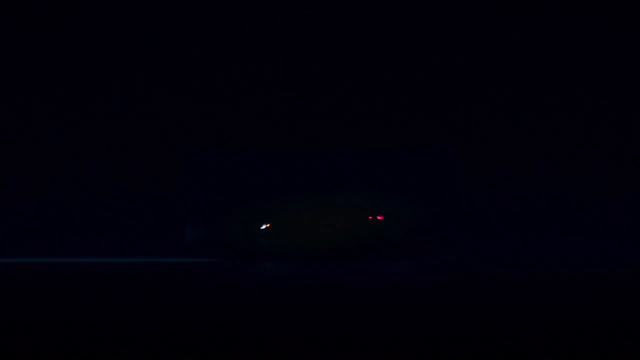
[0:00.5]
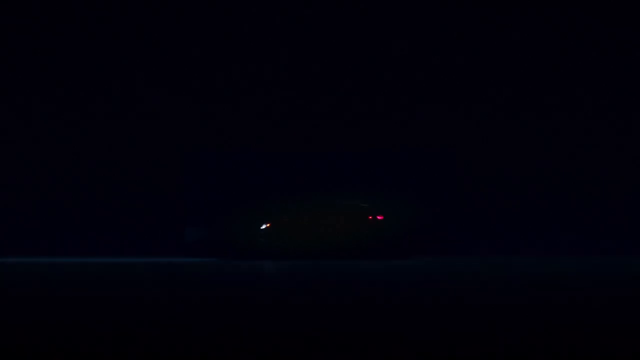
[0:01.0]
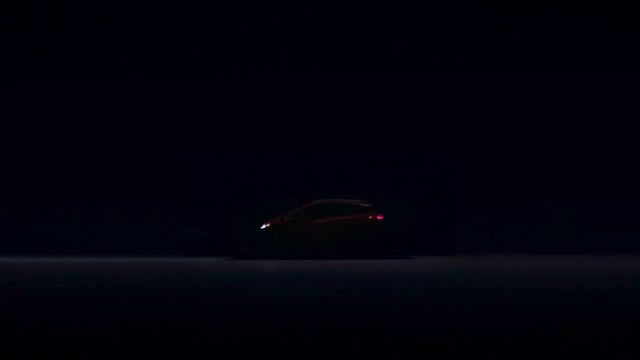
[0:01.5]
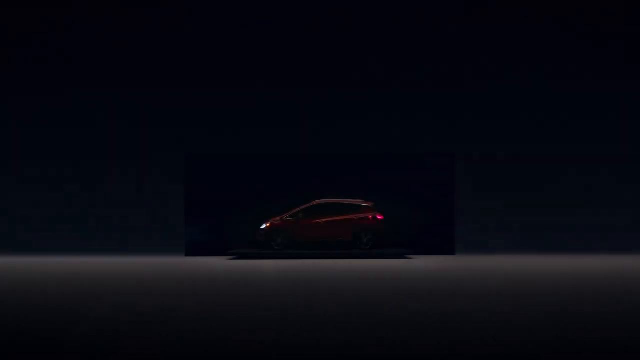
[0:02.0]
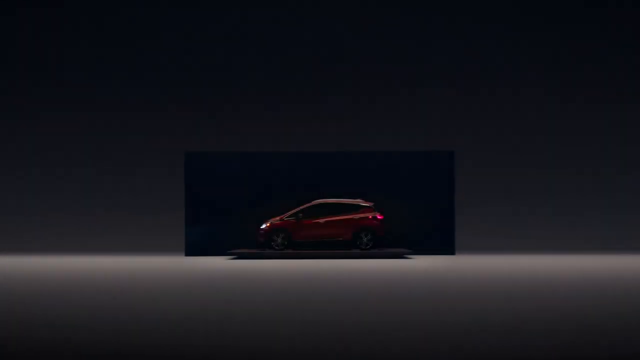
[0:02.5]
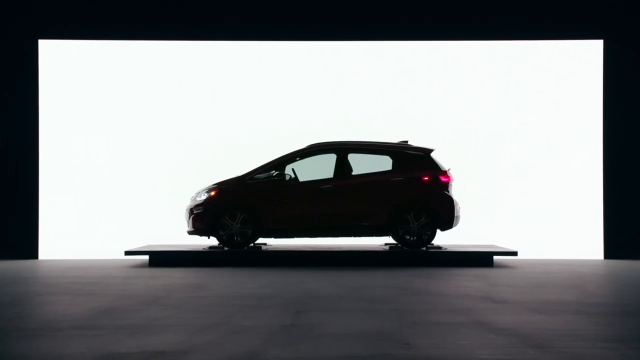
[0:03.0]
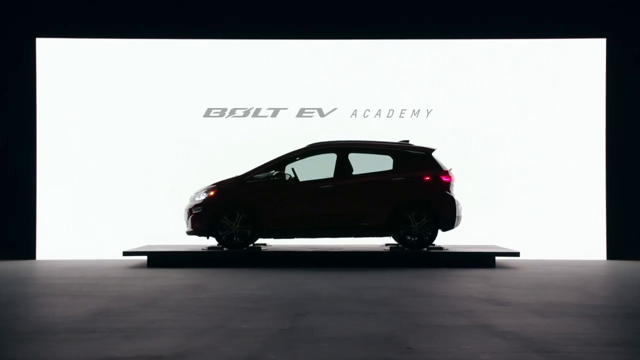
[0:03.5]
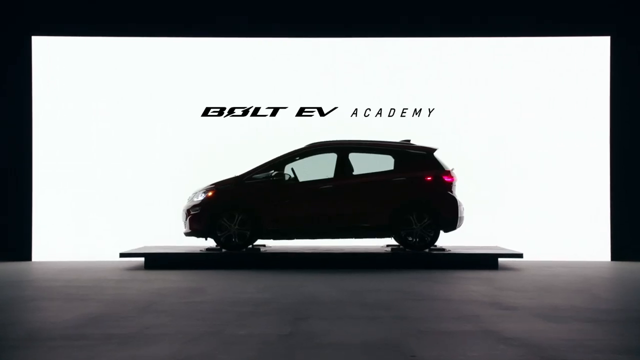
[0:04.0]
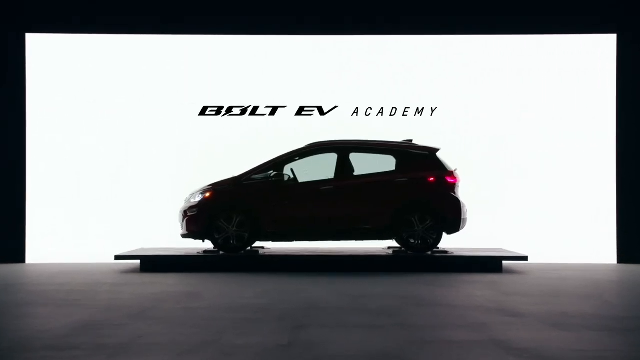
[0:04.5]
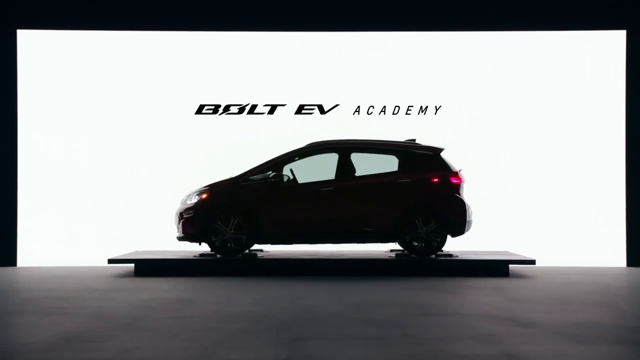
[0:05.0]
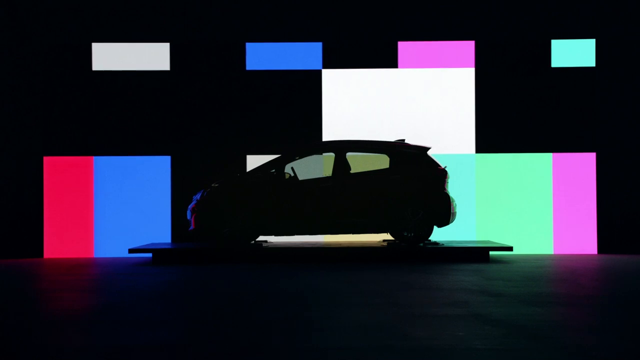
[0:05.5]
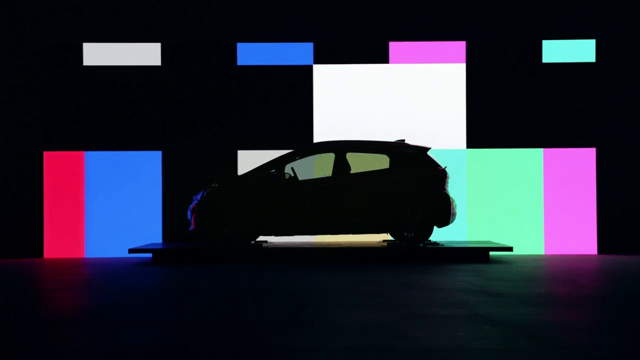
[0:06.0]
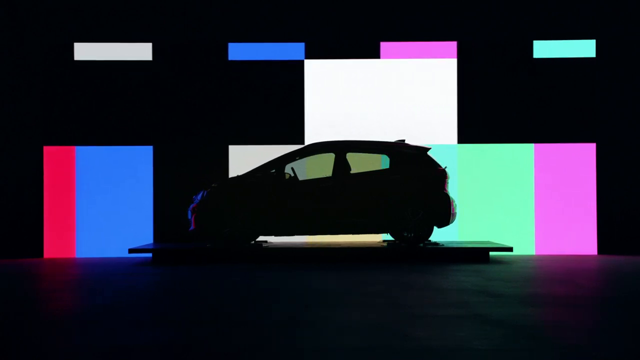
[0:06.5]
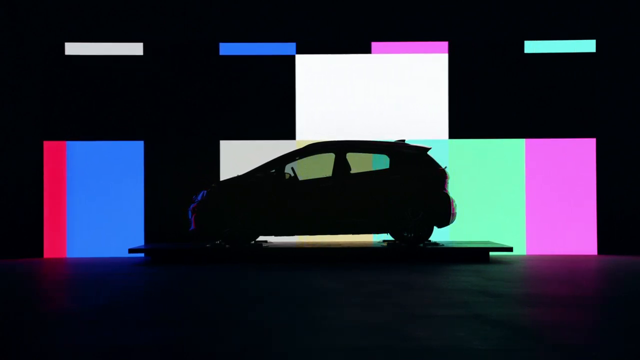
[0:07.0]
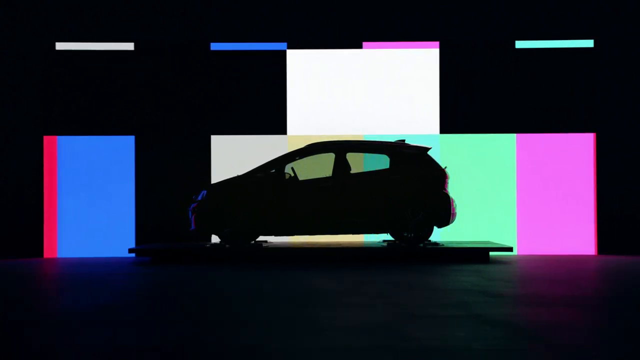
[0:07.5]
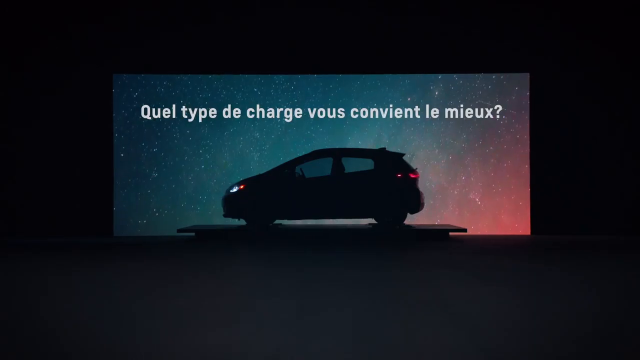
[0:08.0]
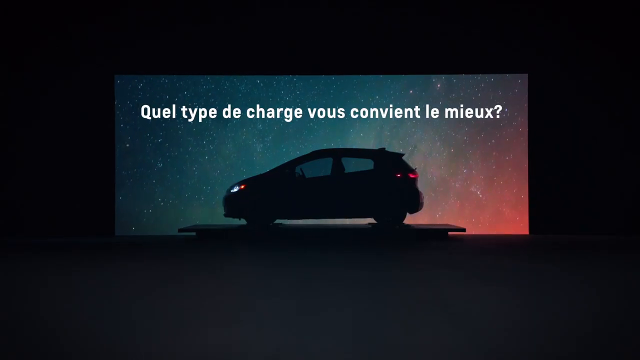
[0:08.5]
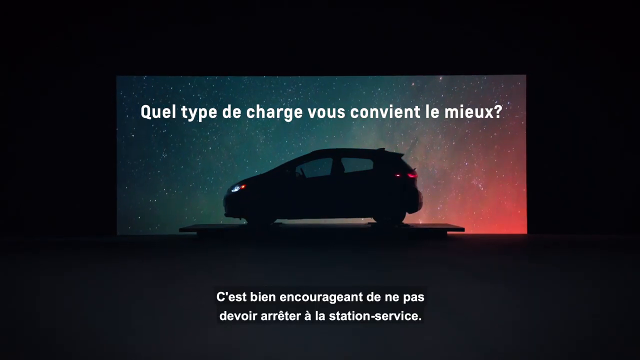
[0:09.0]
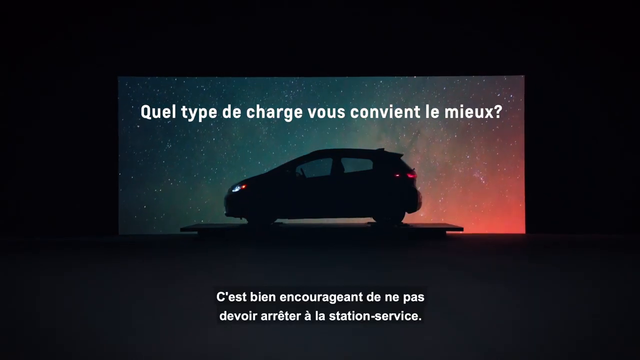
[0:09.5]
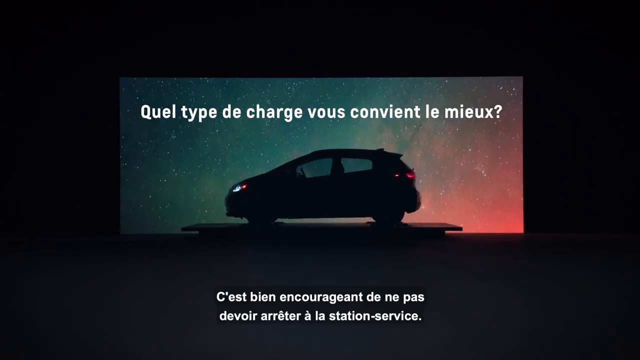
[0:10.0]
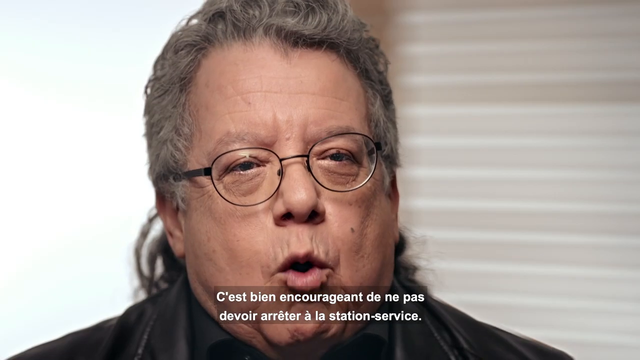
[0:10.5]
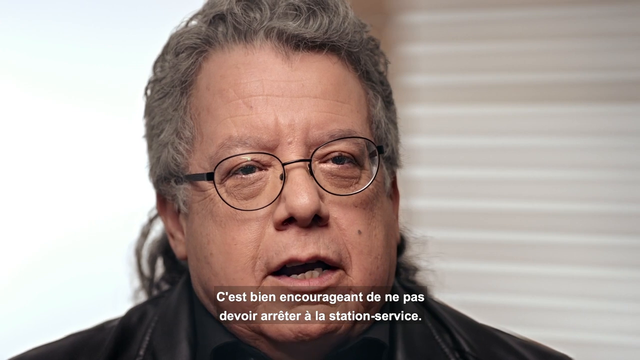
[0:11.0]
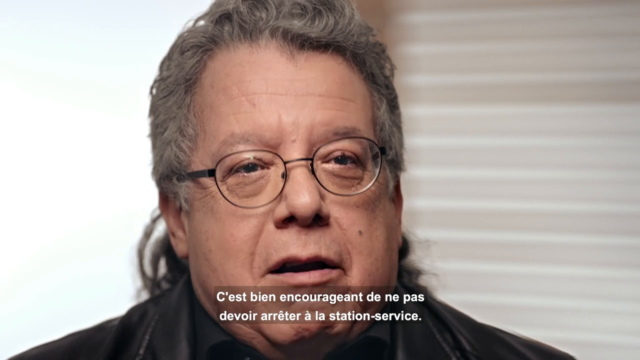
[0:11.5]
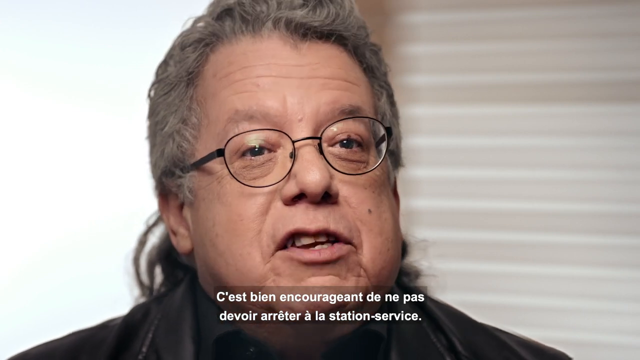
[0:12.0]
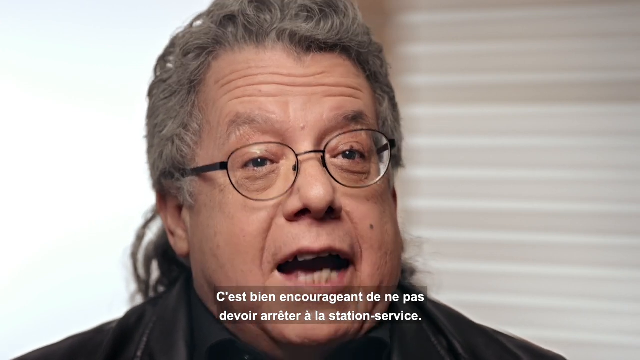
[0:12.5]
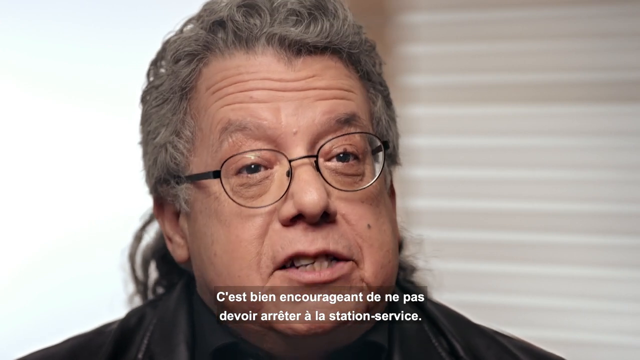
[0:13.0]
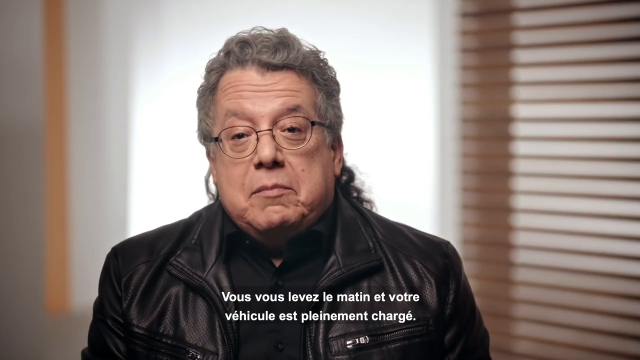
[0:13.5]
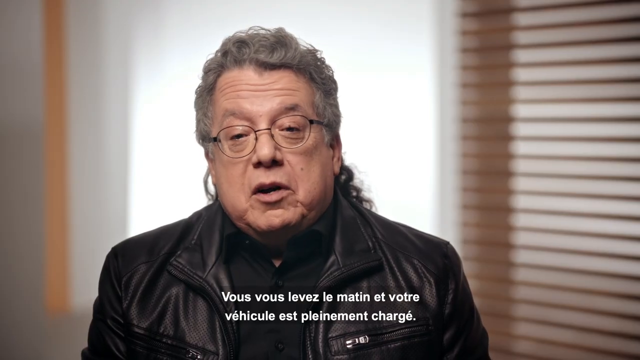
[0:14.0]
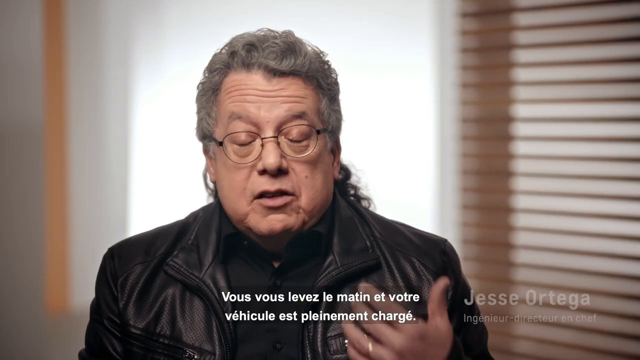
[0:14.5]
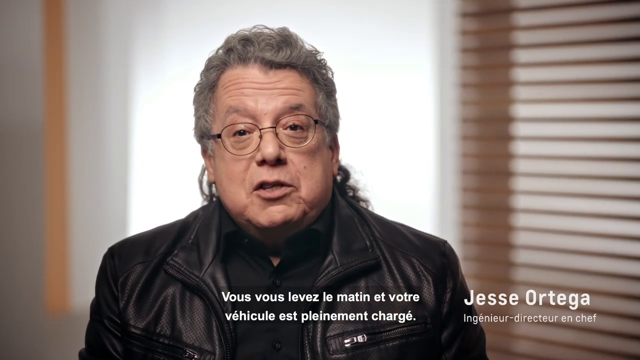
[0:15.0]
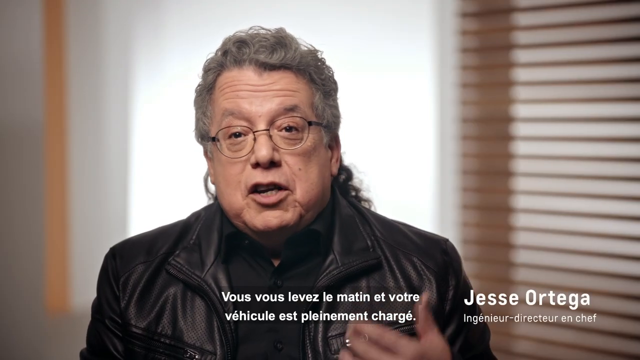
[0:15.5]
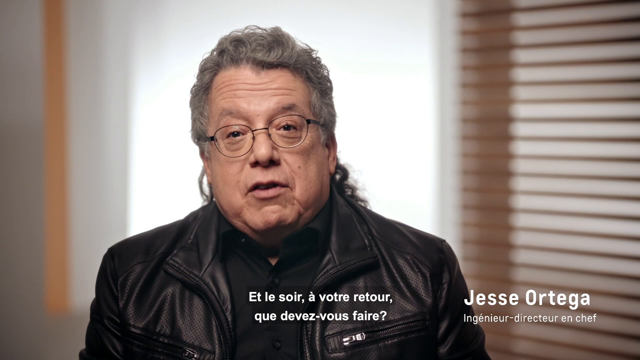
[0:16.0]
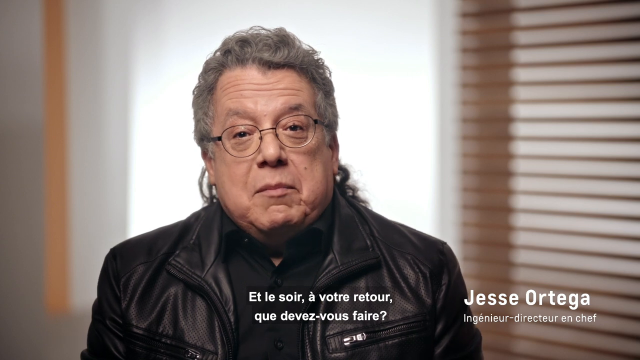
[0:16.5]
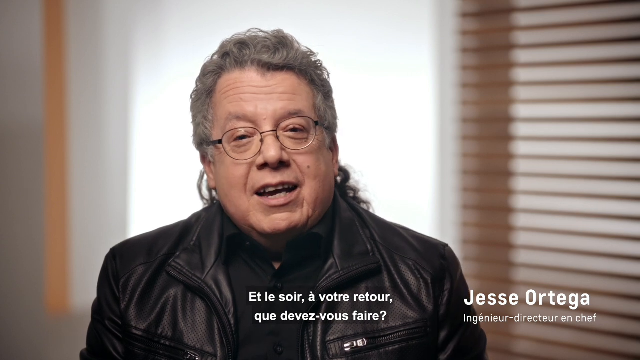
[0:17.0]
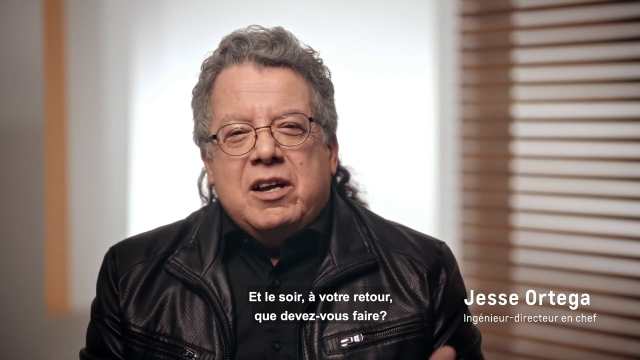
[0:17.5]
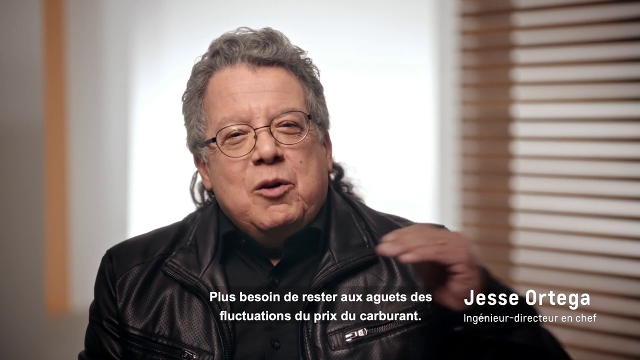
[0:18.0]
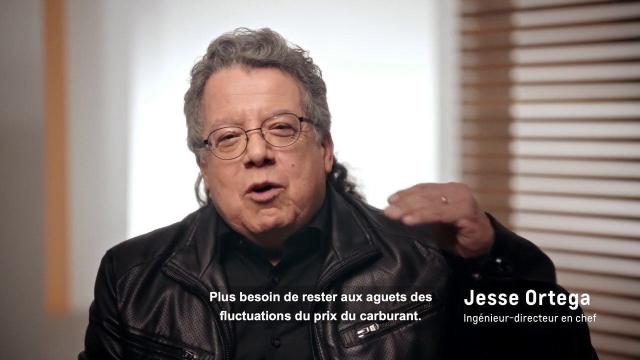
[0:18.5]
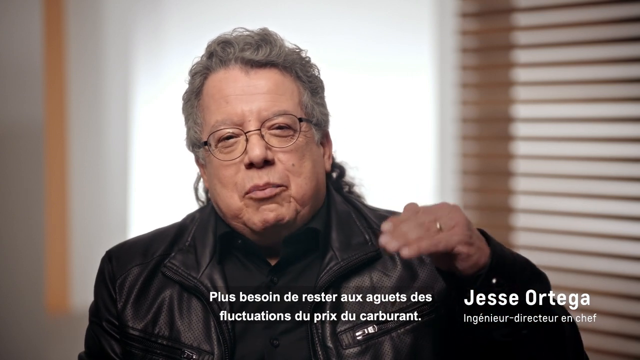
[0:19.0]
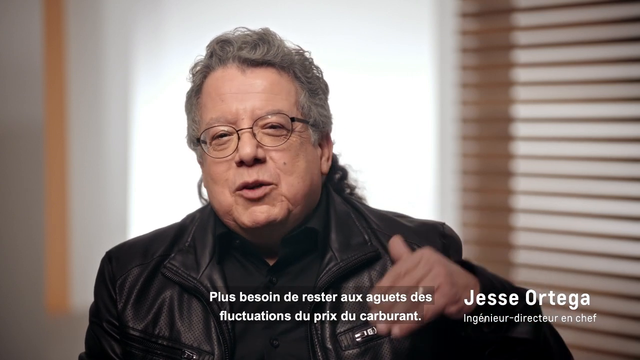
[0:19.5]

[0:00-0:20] The video appears to be an advertisement for Bolt EV Academy. It opens on black, then red brake lights slowly come on, followed by headlights, and the Bolt comes into view, at first mostly as a silhouette with just the brake lights. The car is sitting on a platform with a white screen behind it. The white screen turns multicolored, and then what looks like a starry sky appears behind the car, red on the right and darker on the left. Text in a foreign language appears, phrased as a question and ending "vous convient le mieux". The video then changes to an interview with a man, apparently in French. He has gray hair, glasses, and long hair in a ponytail behind him. French subtitles of what he is saying appear at the bottom, including "C'est bien encourageant de ne pas" followed by more words. Blinds are behind him. He wears a black jacket and a black button-up shirt open at the top with the top button unbuttoned. He looks seriously at the camera, uses his left hand to emphasize points, and has a gold ring on his ring finger.